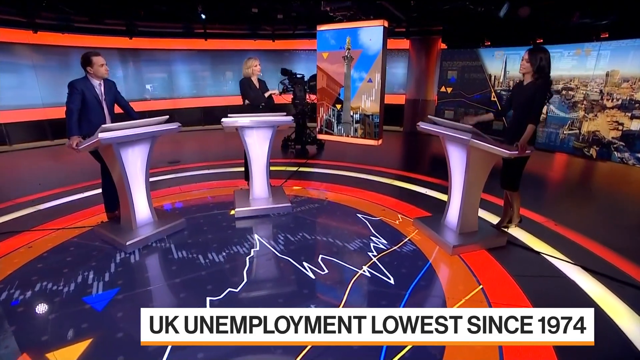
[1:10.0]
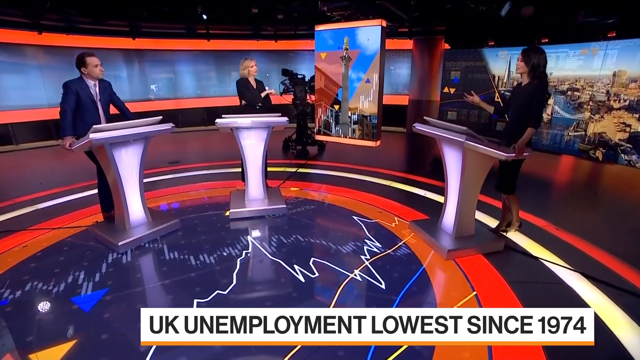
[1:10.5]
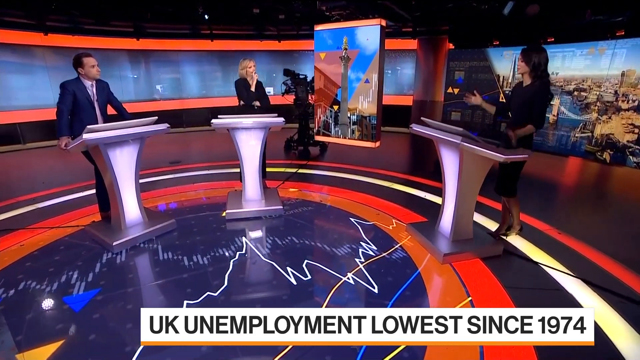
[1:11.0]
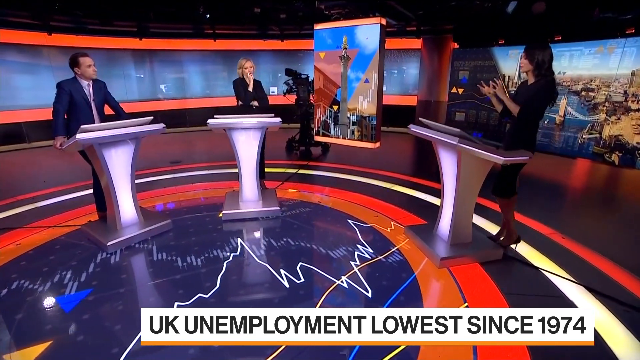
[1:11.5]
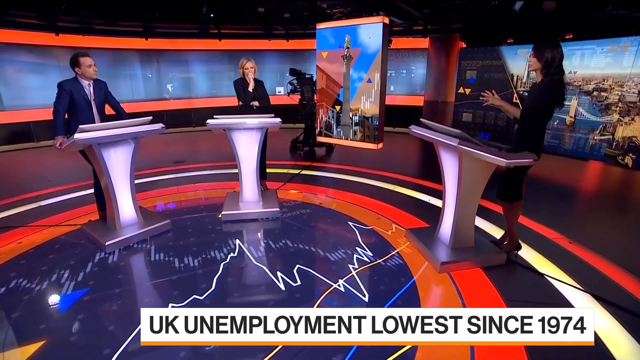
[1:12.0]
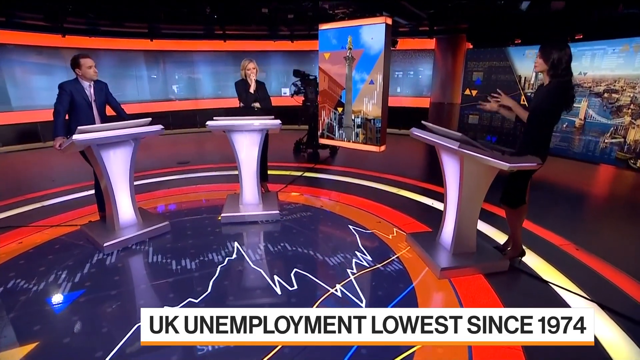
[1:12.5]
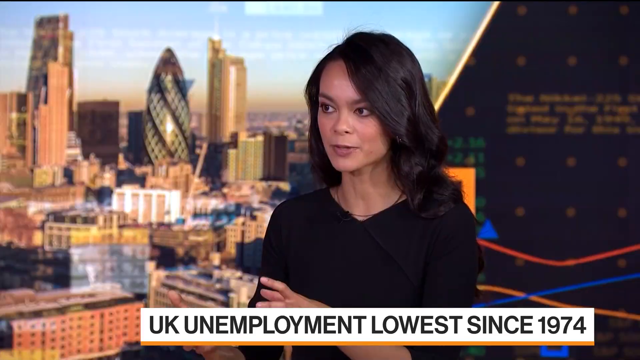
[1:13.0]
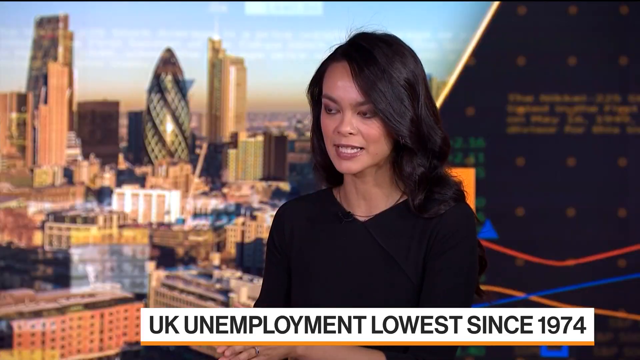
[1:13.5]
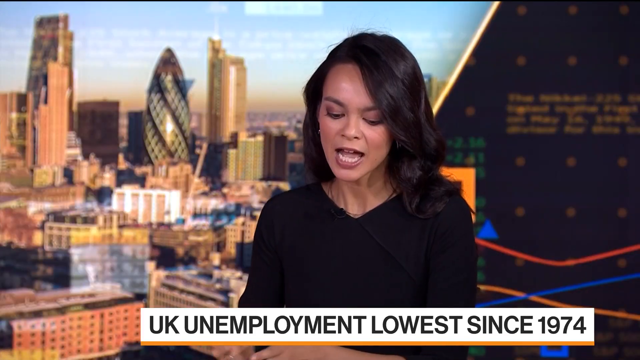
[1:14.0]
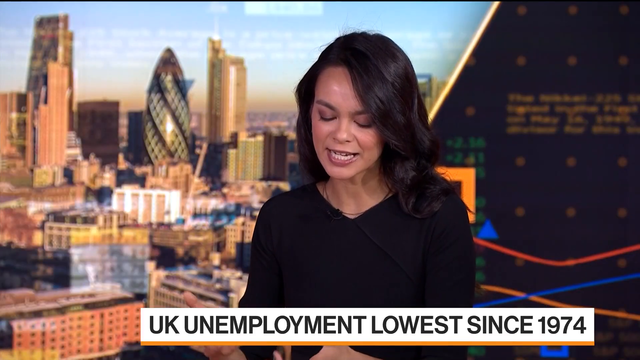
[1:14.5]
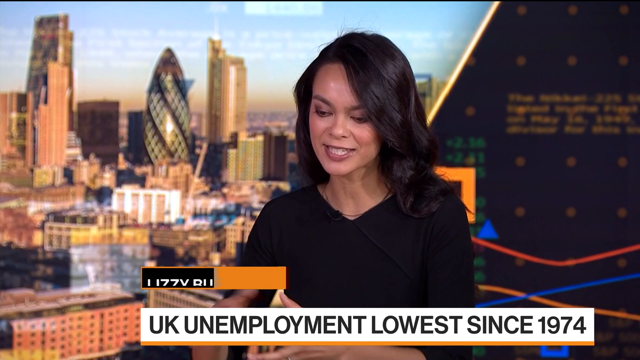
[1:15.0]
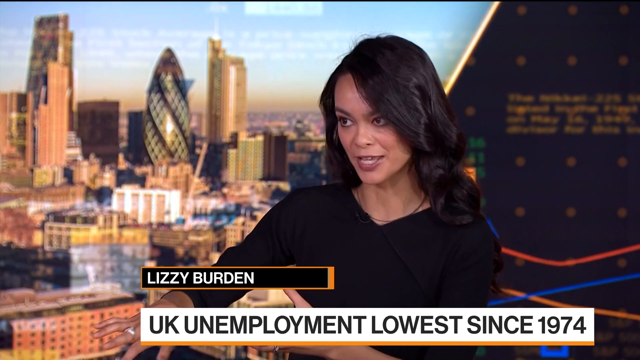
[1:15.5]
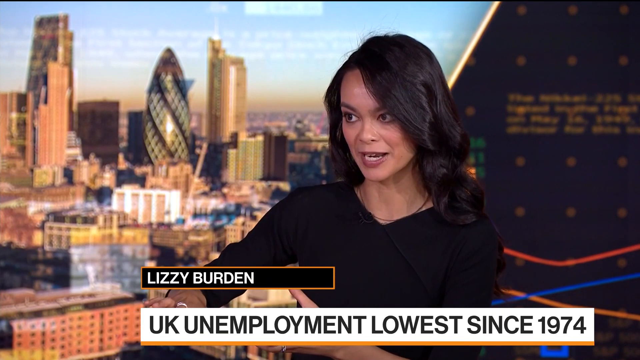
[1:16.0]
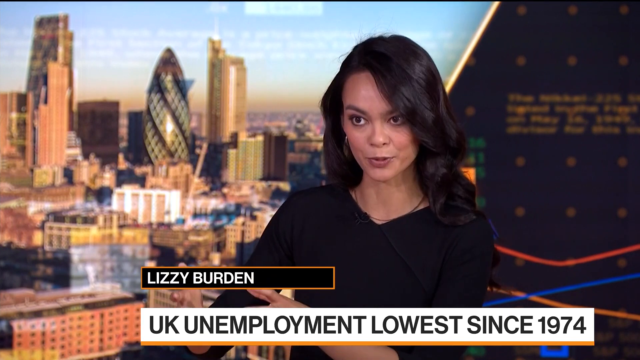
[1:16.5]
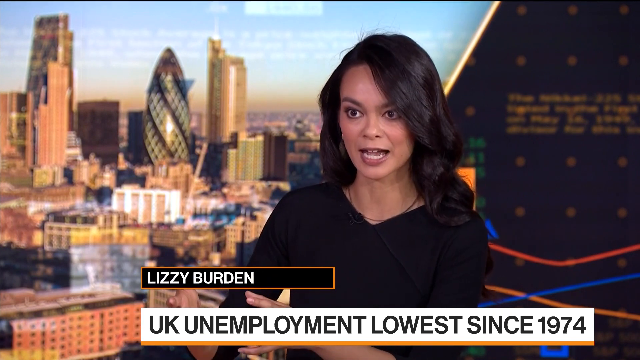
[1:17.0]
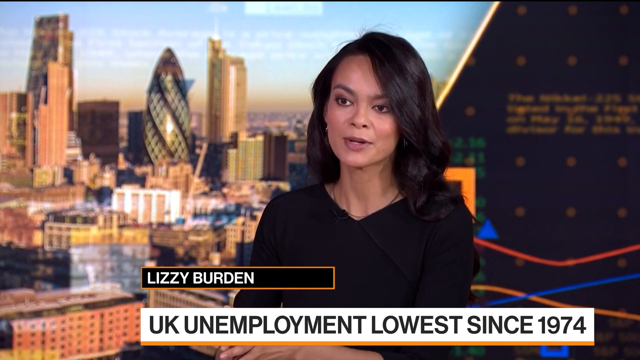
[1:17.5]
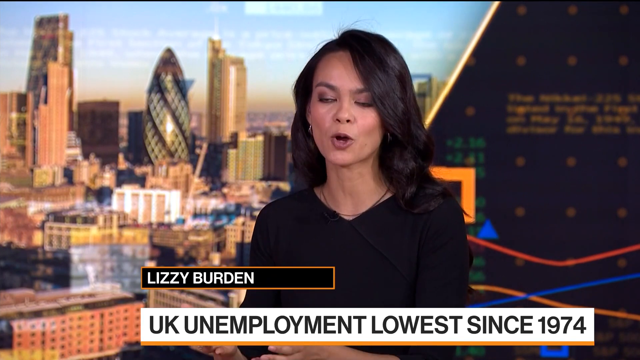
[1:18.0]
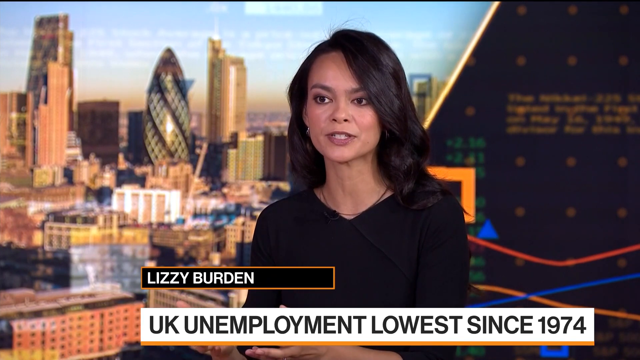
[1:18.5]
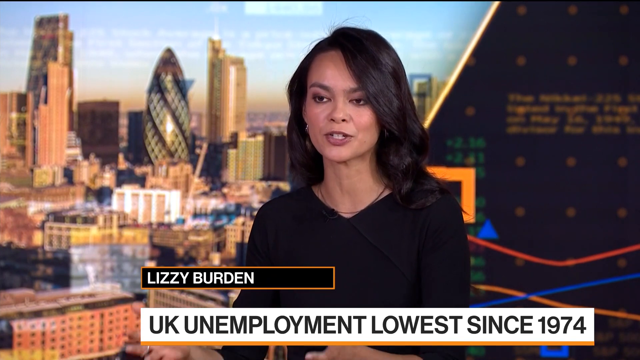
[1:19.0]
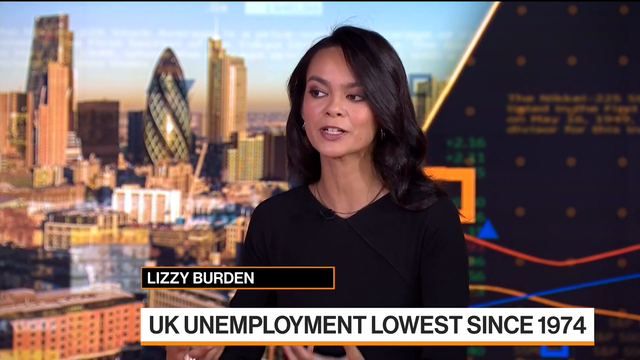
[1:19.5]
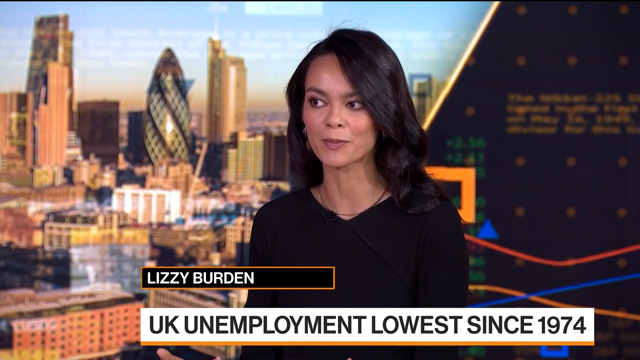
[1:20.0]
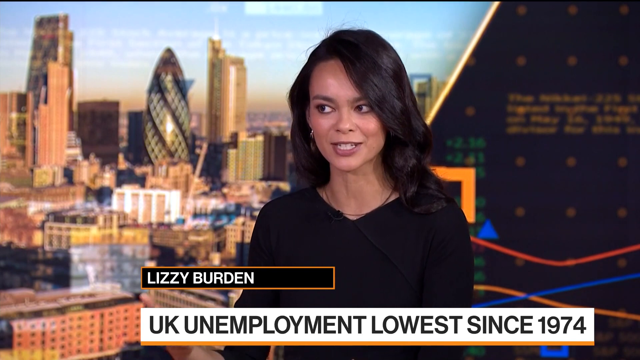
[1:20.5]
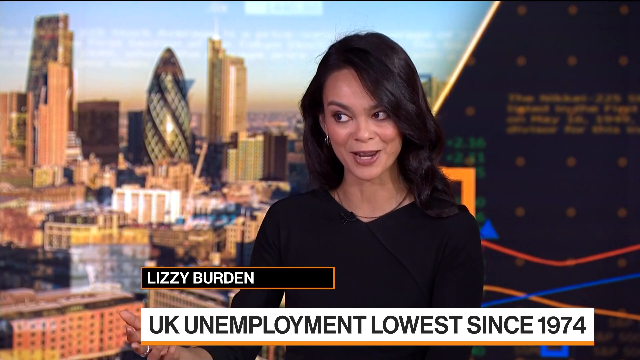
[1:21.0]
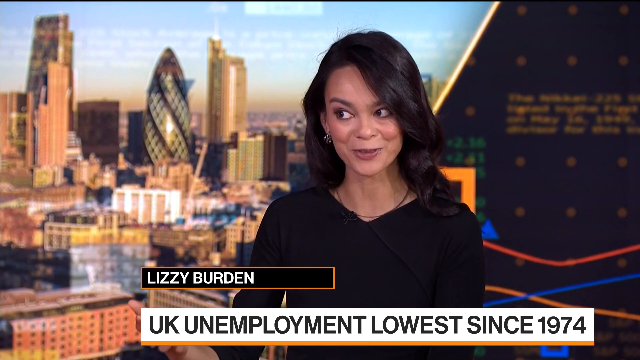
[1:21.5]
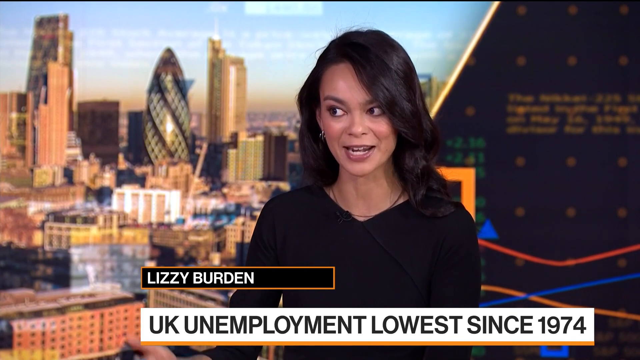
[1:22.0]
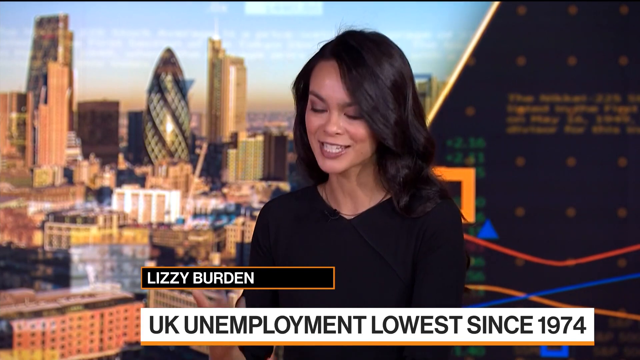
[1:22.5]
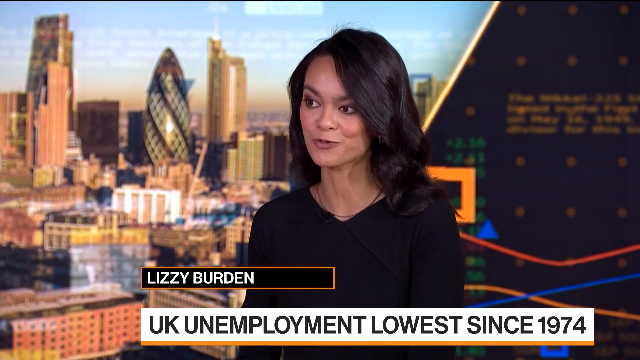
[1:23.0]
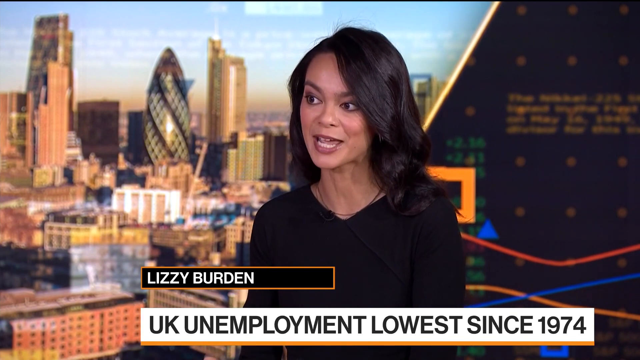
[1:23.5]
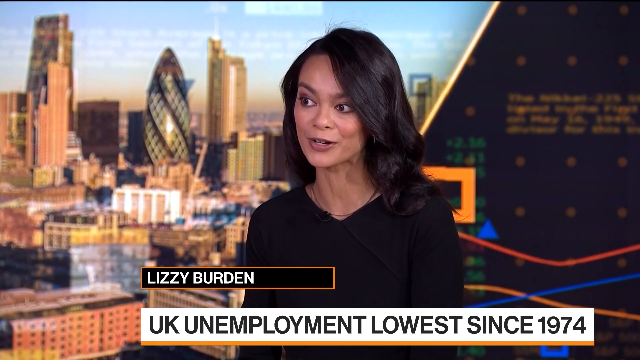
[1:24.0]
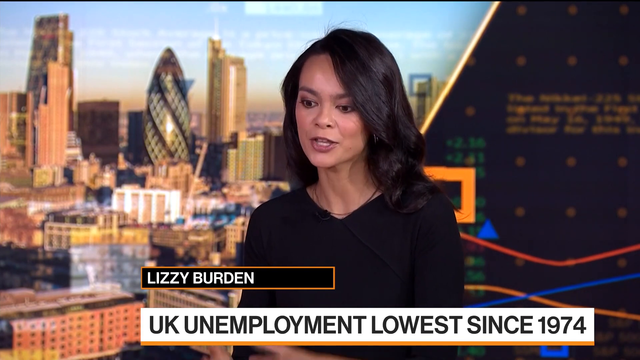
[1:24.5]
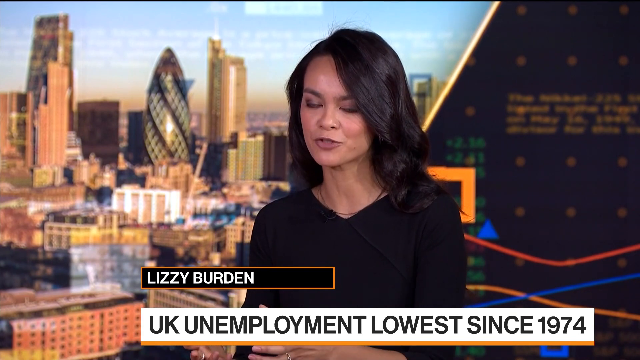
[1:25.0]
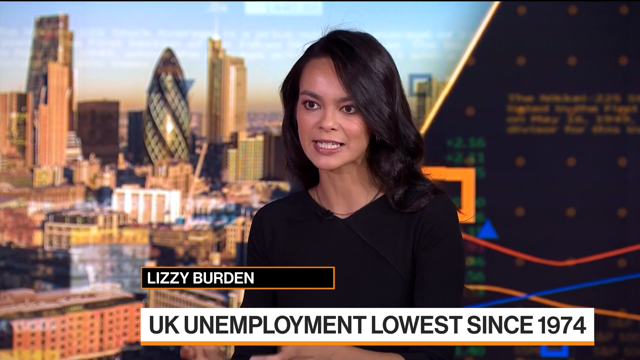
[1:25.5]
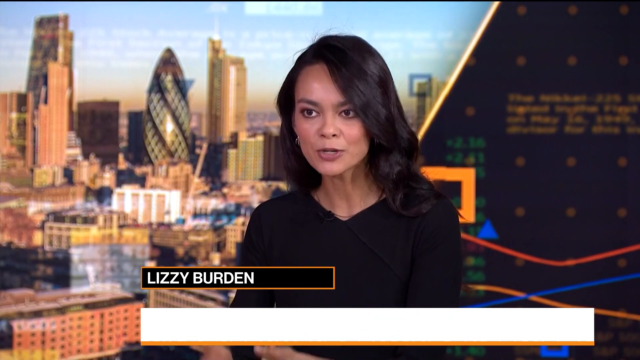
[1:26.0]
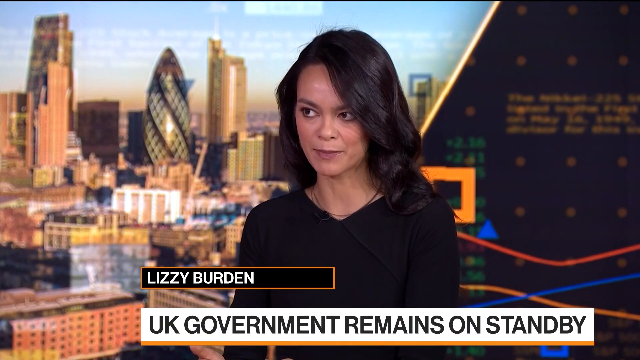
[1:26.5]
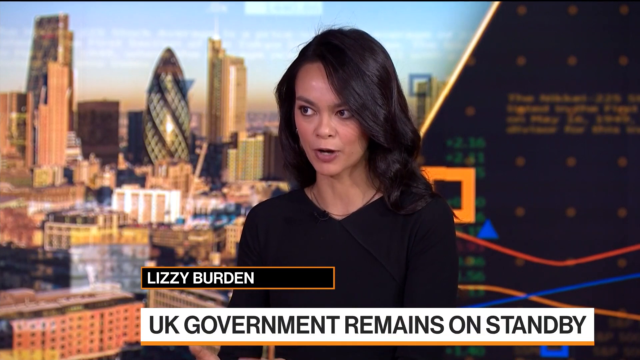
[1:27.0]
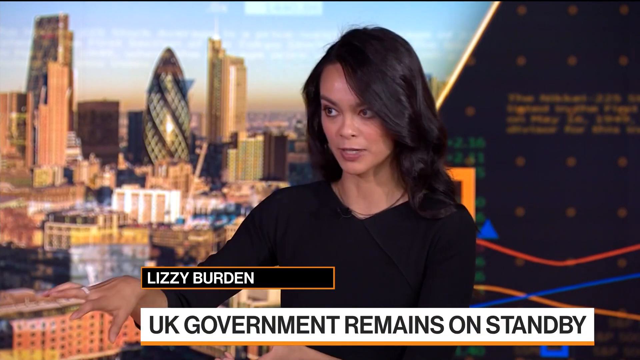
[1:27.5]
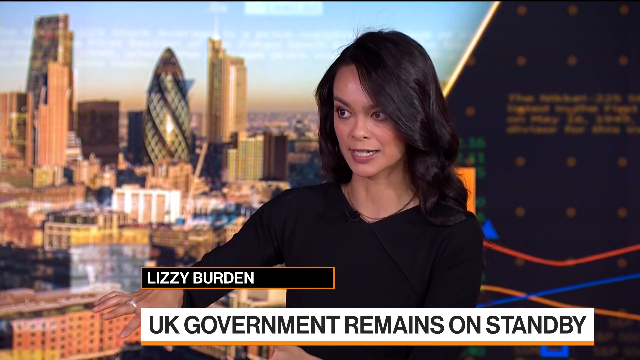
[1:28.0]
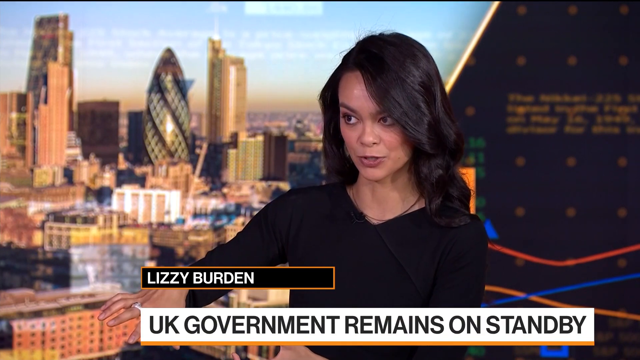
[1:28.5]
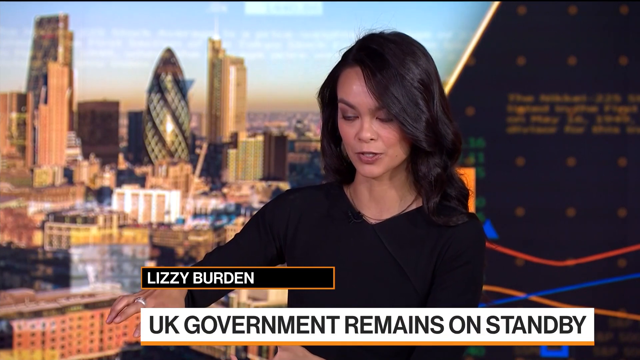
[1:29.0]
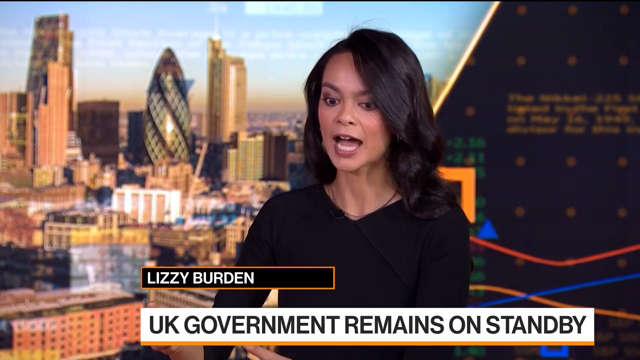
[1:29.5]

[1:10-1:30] A full shot shows Lizzie Burden in the studio, continuing to talk about the story. She is in front of a city scene, with the chart taking up about half of the picture. The city apparently is not New York; it is perhaps somewhere in China or elsewhere overseas.